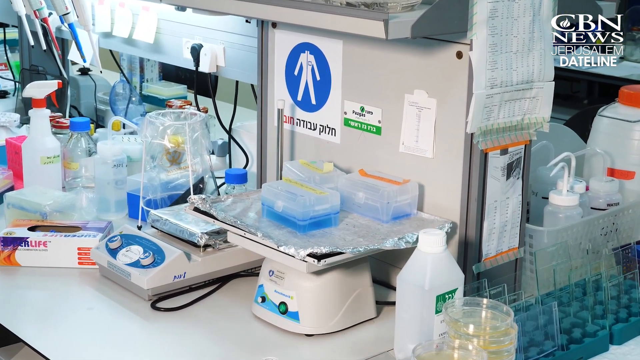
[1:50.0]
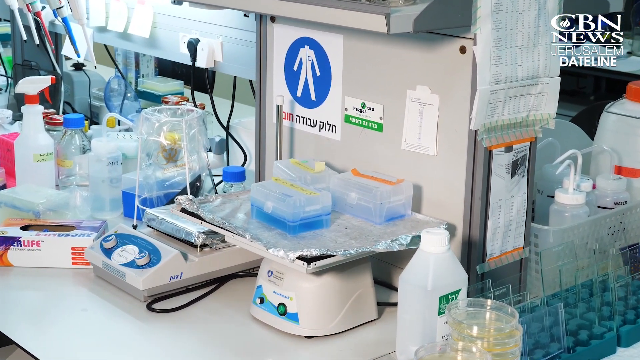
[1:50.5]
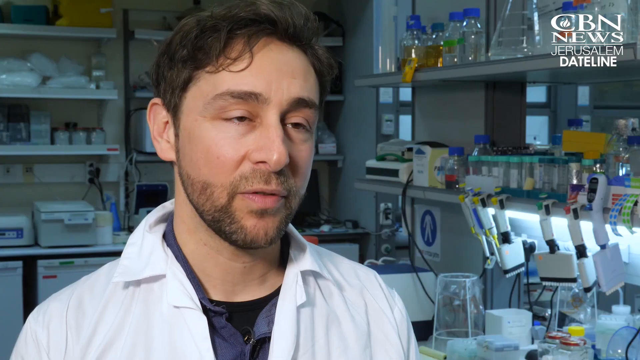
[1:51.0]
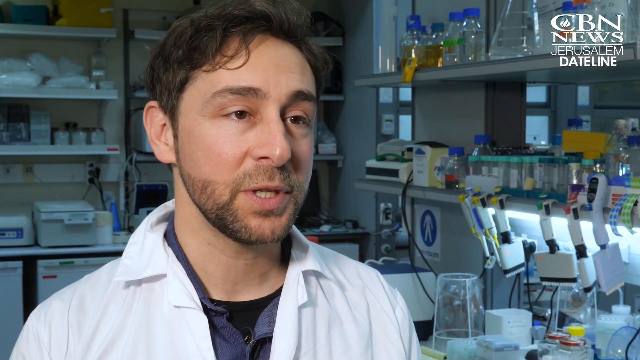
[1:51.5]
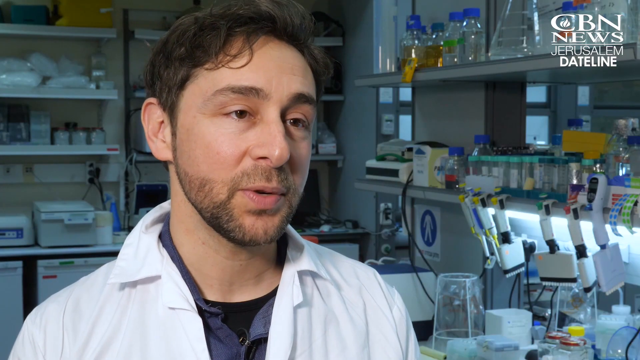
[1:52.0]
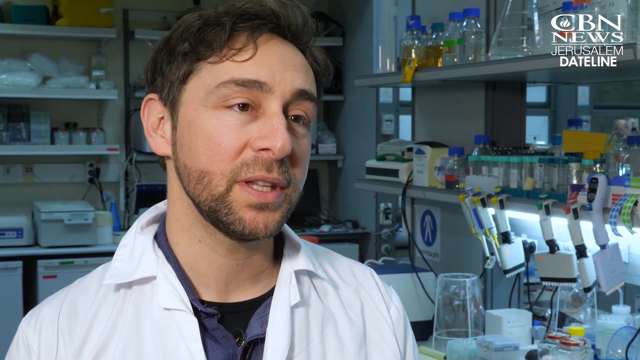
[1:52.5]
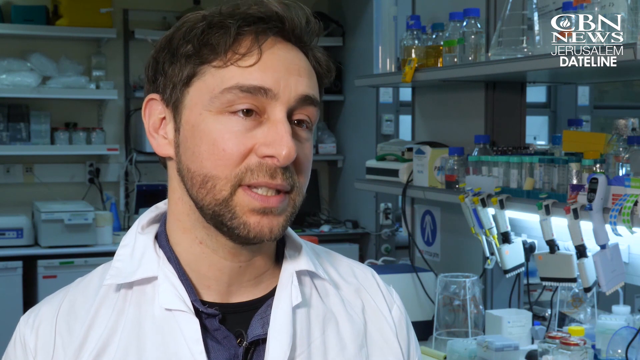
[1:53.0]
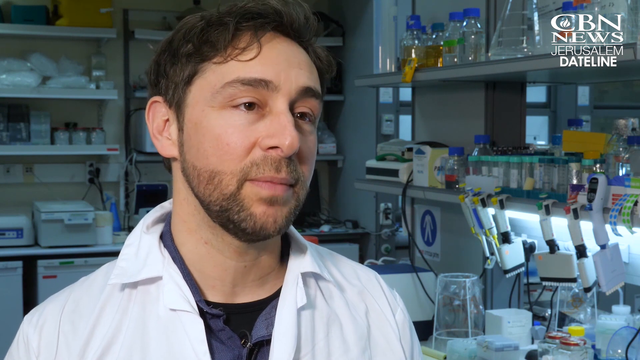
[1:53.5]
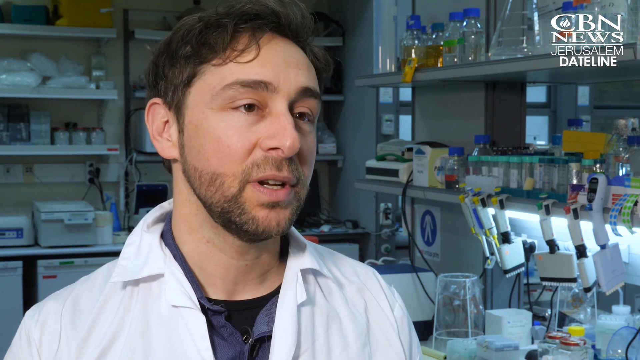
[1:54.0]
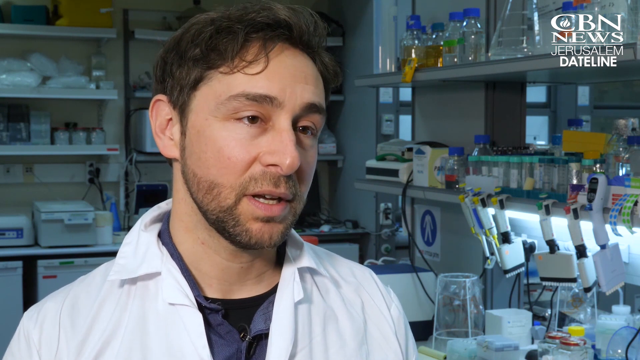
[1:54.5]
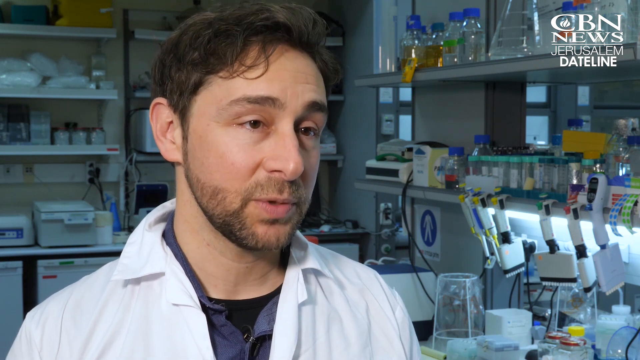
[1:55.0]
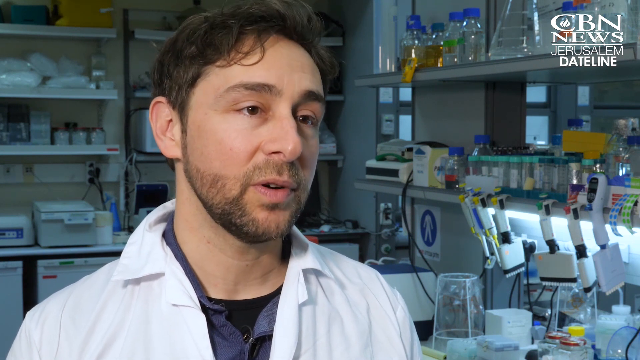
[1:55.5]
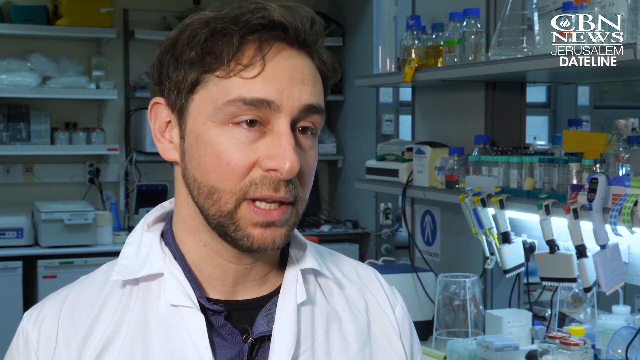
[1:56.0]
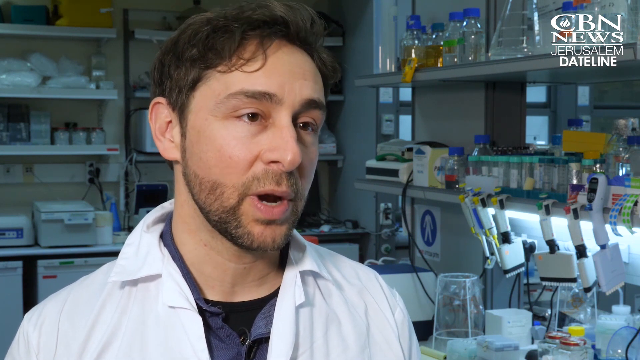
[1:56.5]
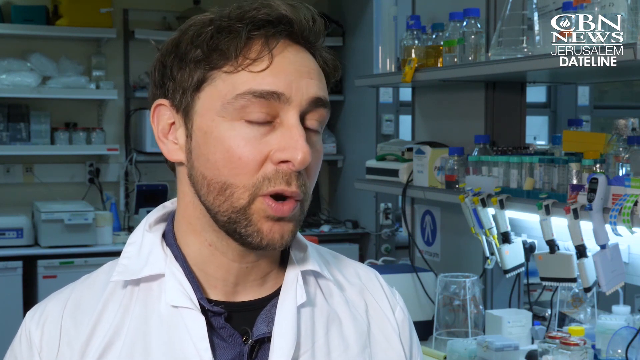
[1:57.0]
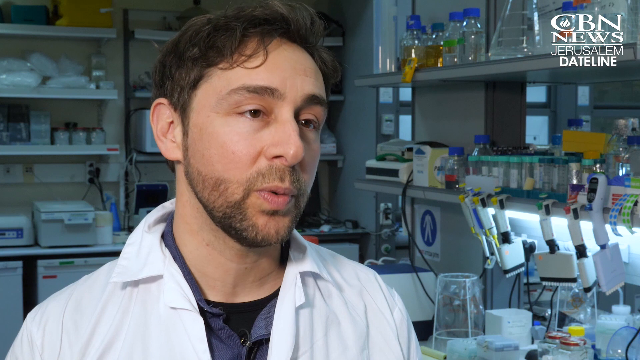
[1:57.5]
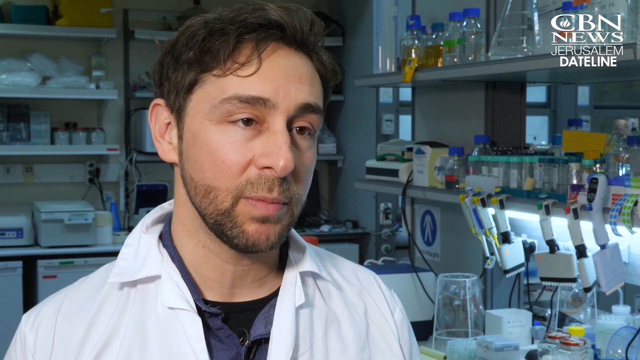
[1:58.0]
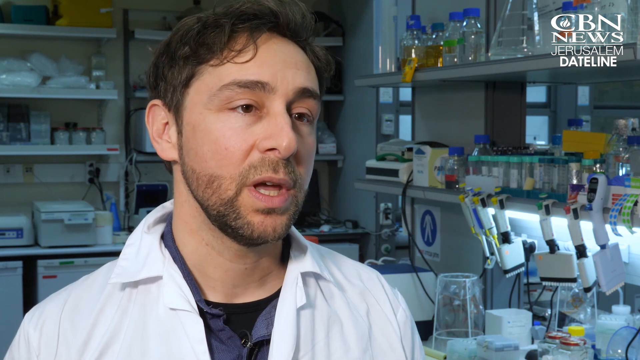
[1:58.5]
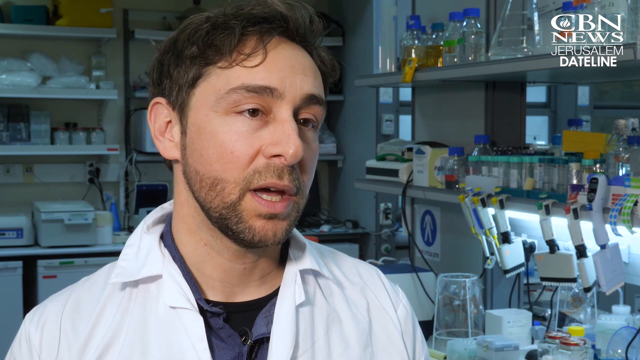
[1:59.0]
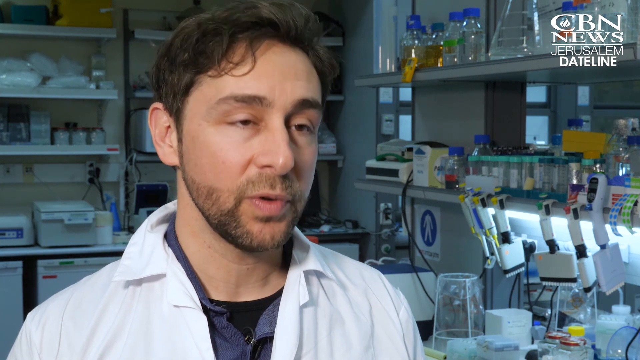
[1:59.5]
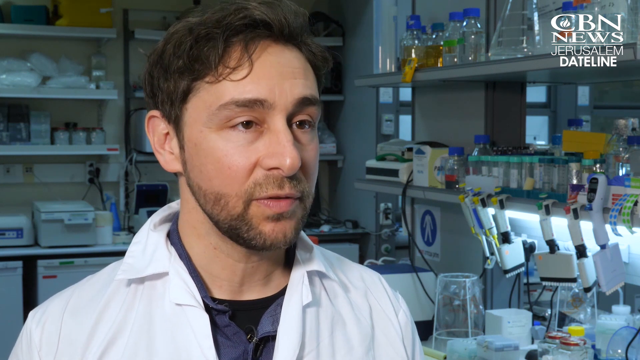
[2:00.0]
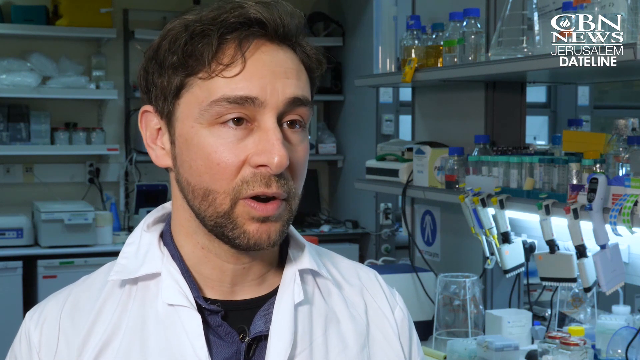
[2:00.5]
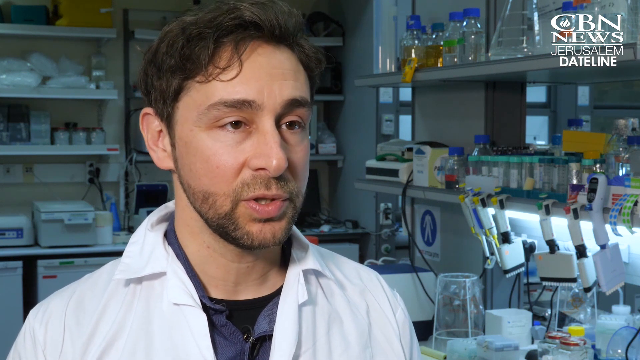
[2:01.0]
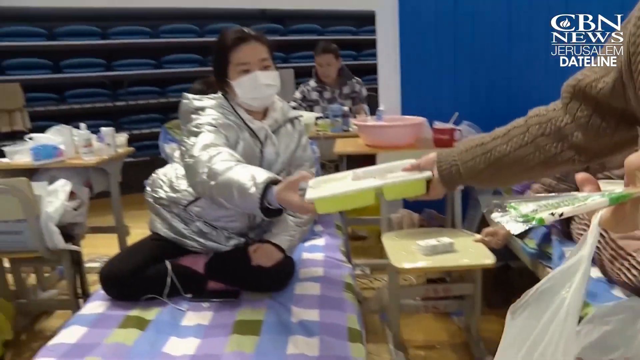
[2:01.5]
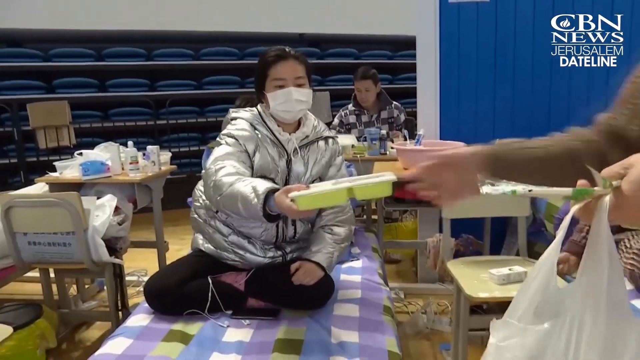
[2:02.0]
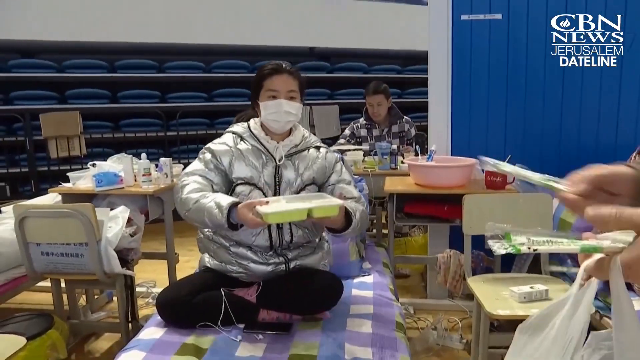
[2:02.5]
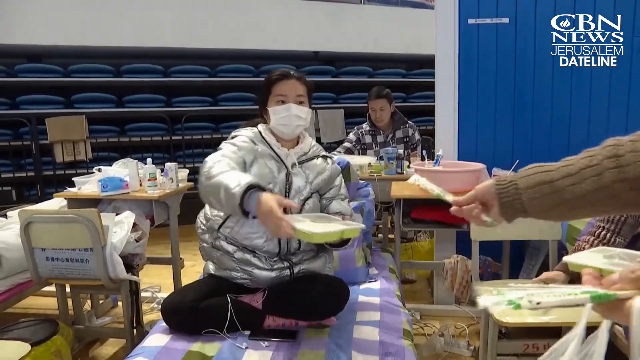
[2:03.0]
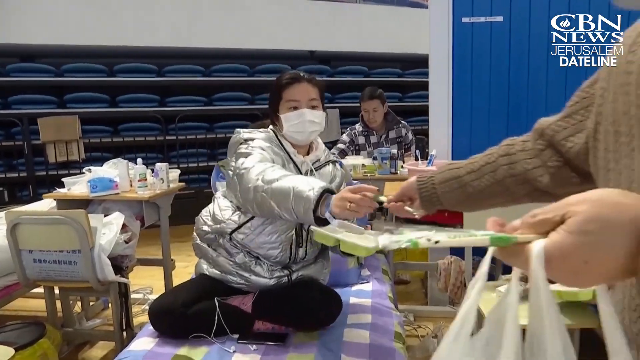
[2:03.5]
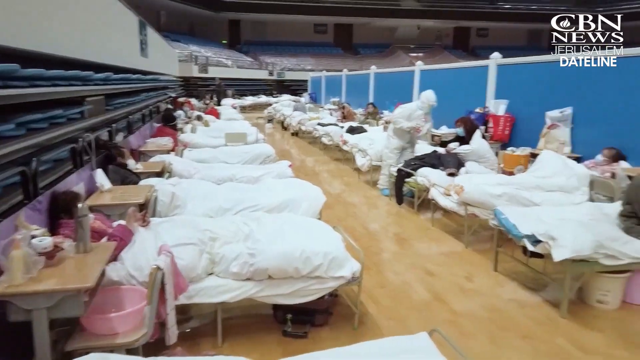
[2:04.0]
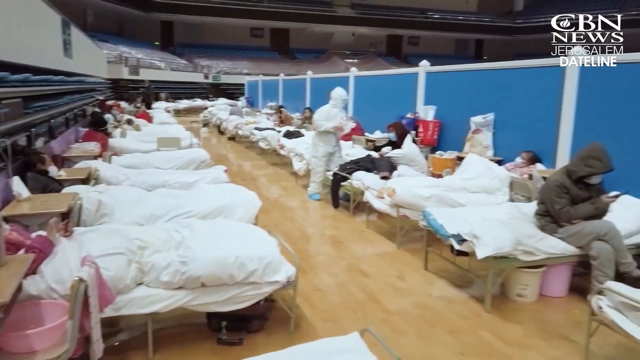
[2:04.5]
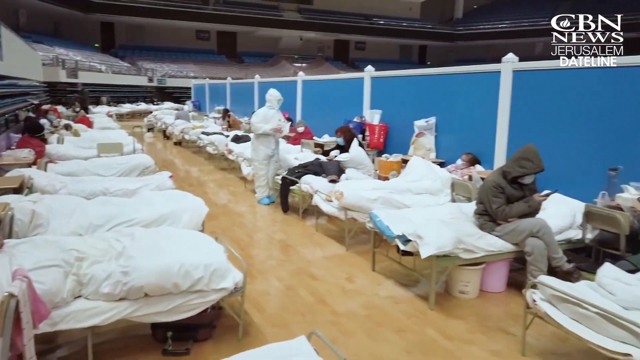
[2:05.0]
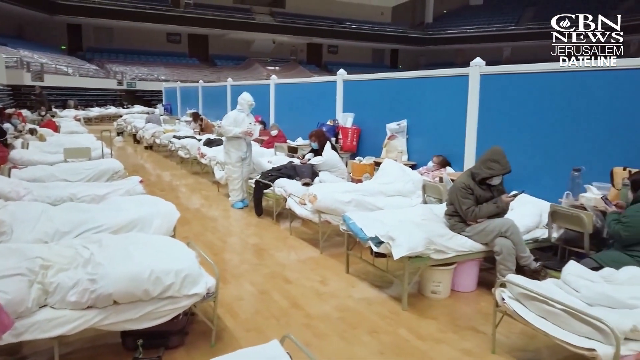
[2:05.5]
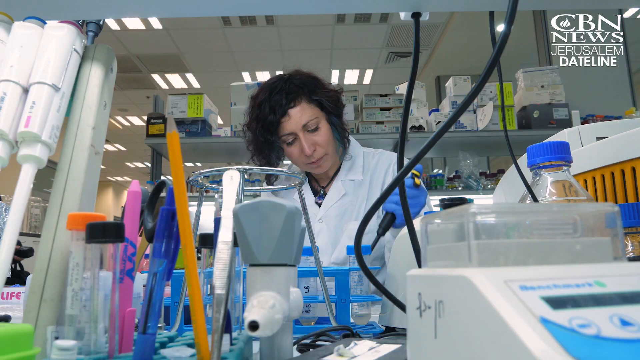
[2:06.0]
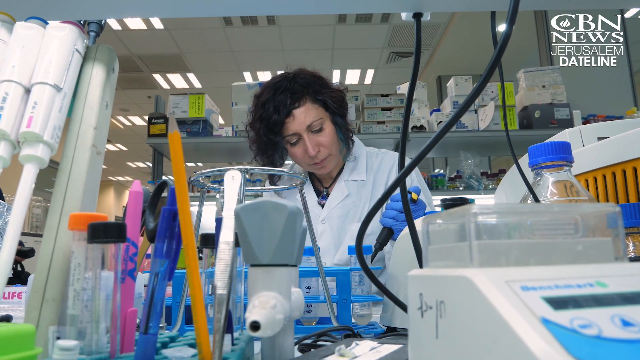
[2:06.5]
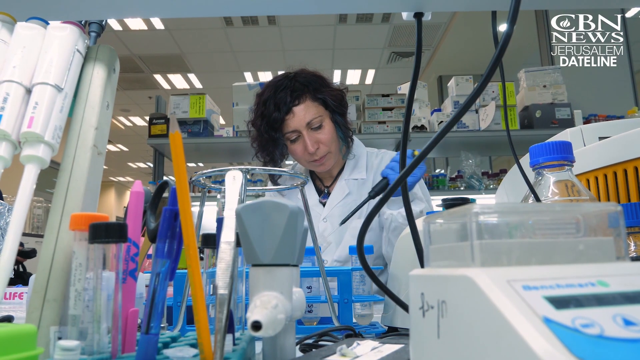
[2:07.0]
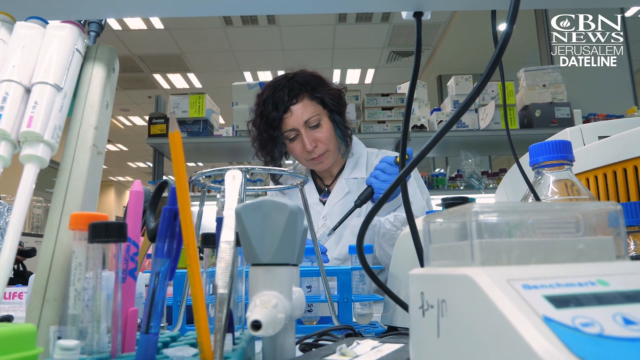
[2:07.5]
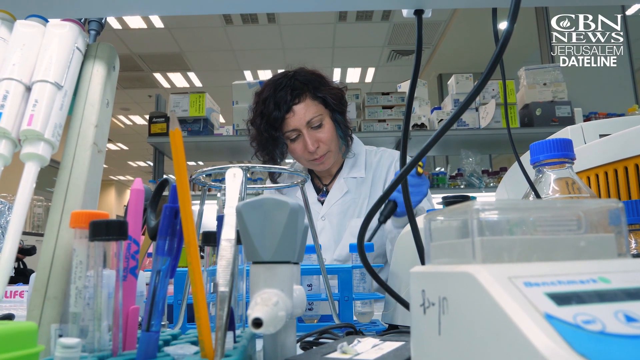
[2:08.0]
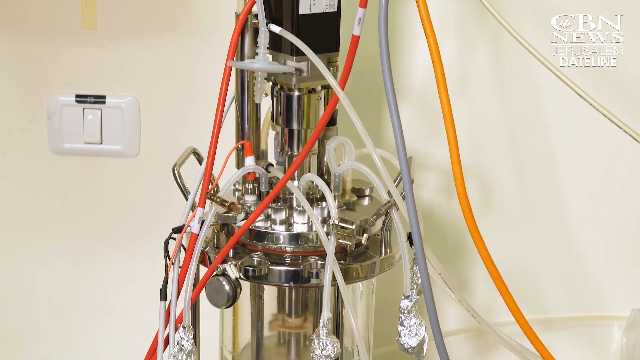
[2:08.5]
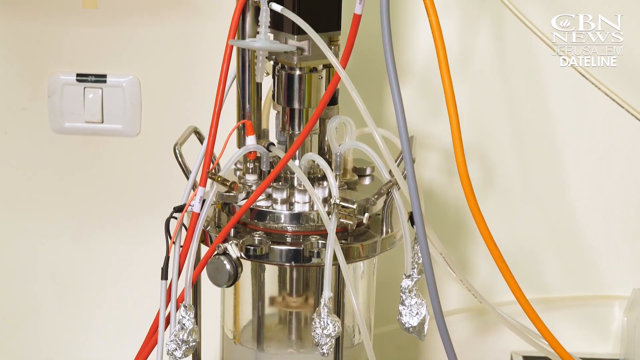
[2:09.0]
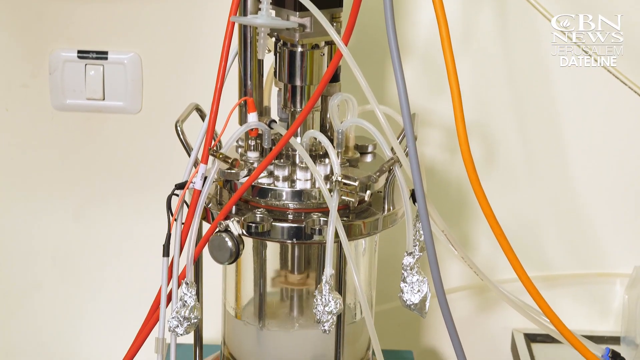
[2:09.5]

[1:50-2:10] The same scale seen at the beginning of the video moves plastic containers around on its surface, this time with a closer focus on it. The scale is white and moves around in a sort of counterclockwise circle. More footage follows of the wavy-haired man being interviewed. Then people hand out some sort of lunch boxes to people. There is also footage of a huge, almost medical camp with a bunch of people in beds lined up next to each other; they all have masks on and are sitting there, and it looks like a testing camp for people who are really sick.